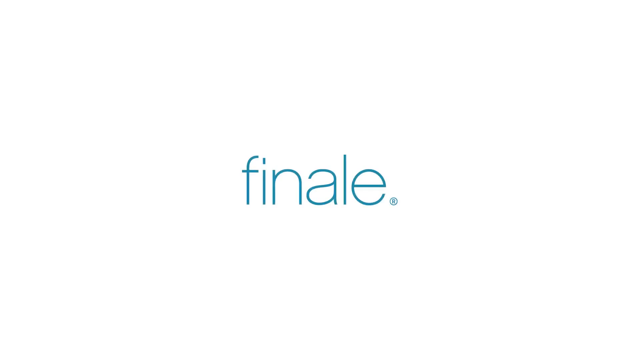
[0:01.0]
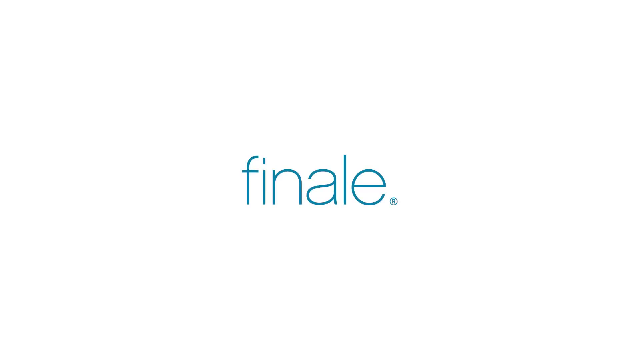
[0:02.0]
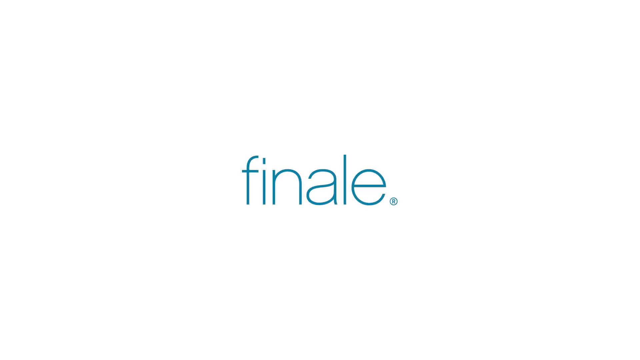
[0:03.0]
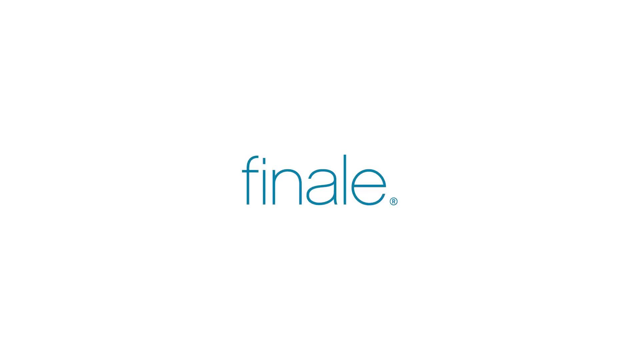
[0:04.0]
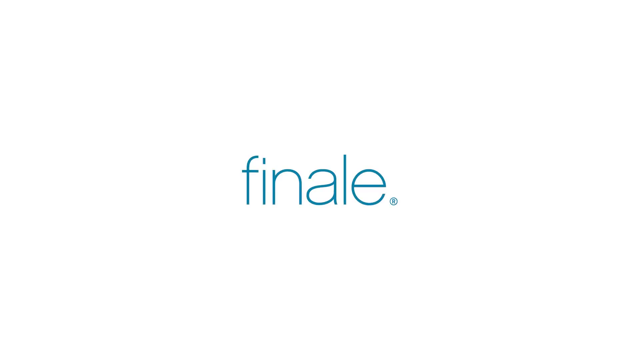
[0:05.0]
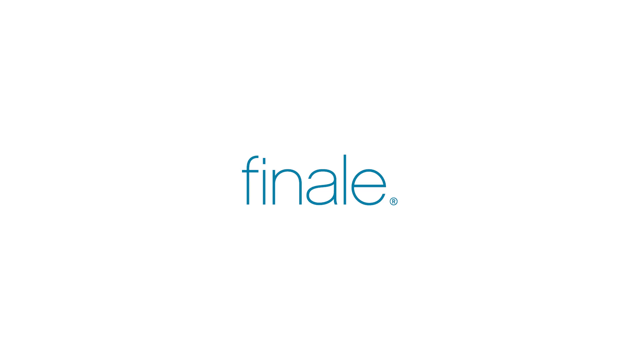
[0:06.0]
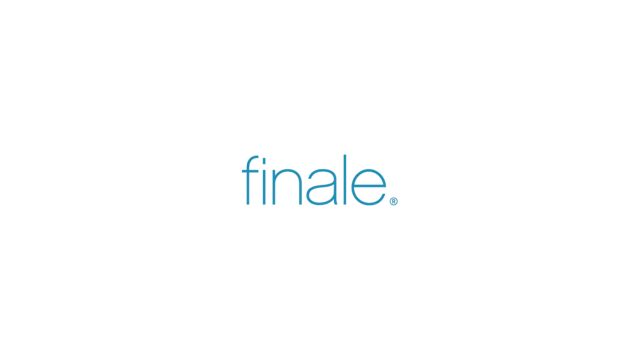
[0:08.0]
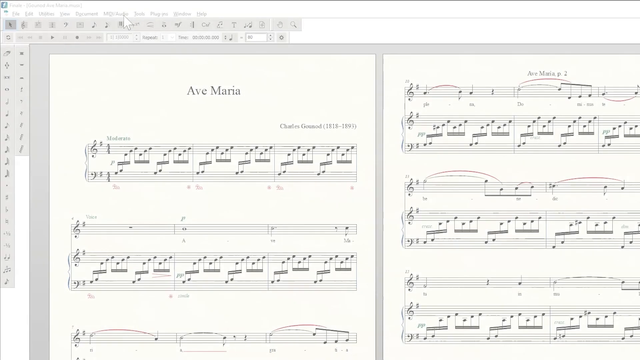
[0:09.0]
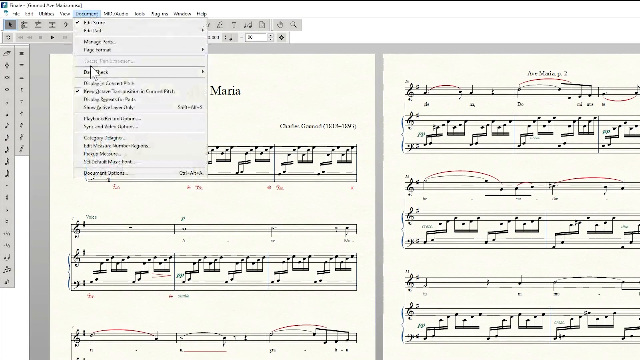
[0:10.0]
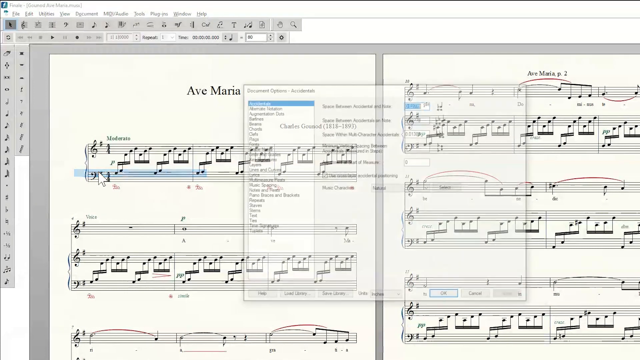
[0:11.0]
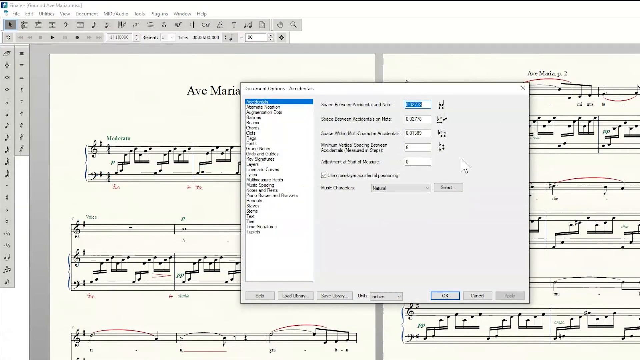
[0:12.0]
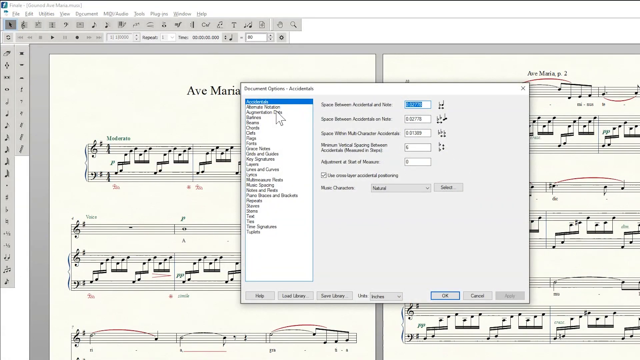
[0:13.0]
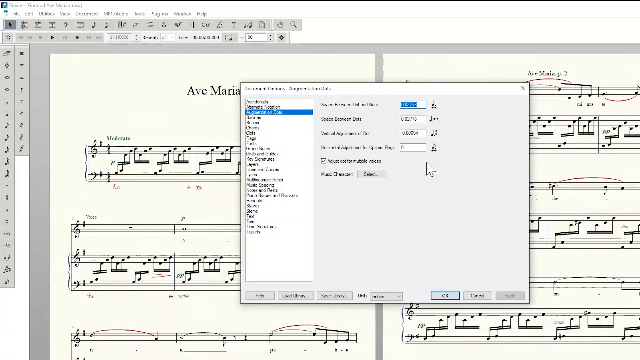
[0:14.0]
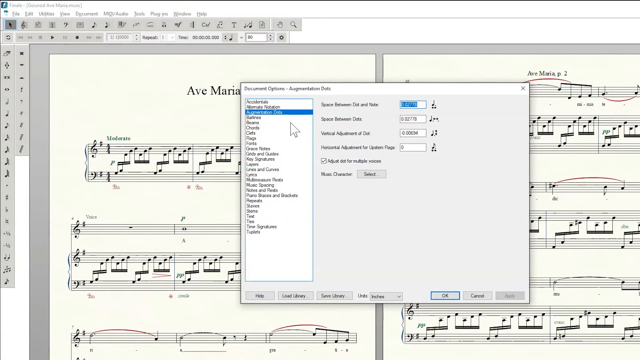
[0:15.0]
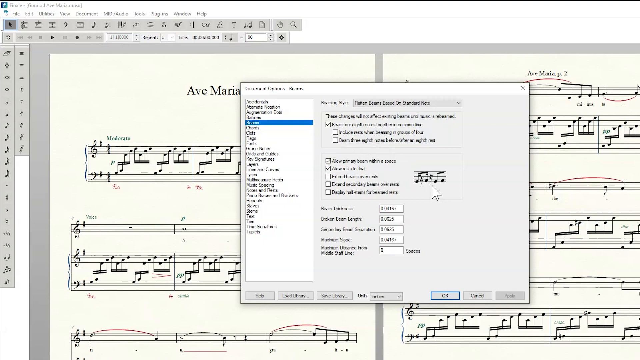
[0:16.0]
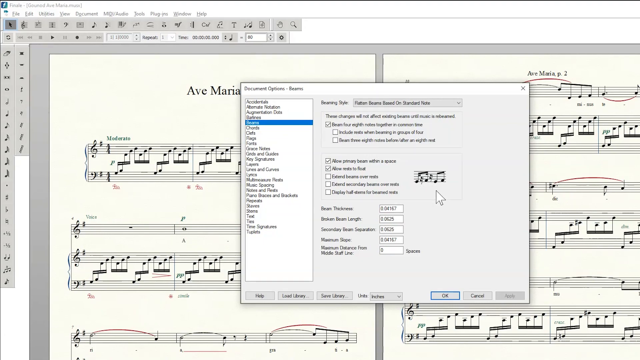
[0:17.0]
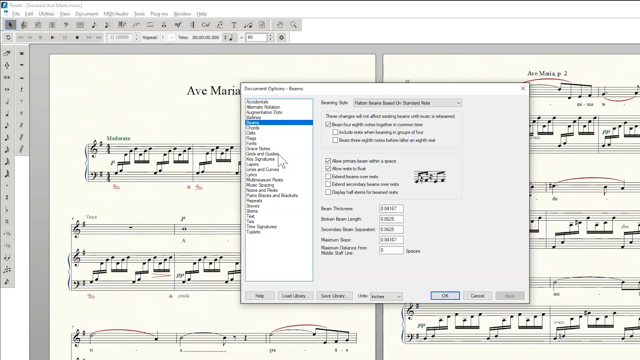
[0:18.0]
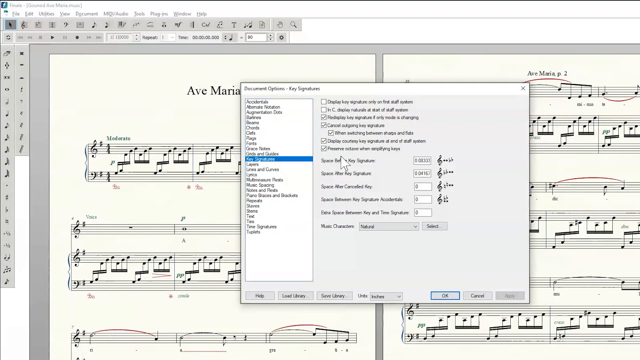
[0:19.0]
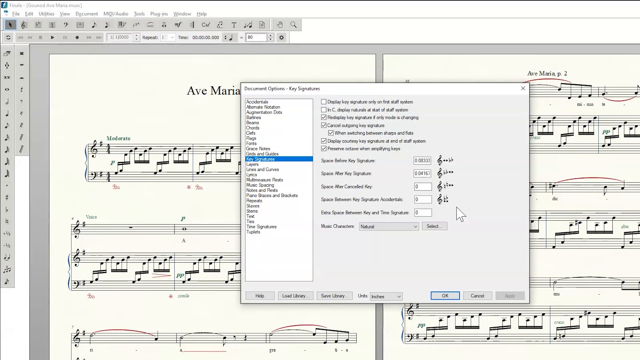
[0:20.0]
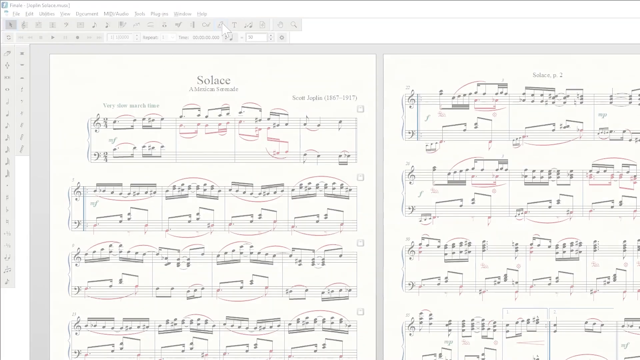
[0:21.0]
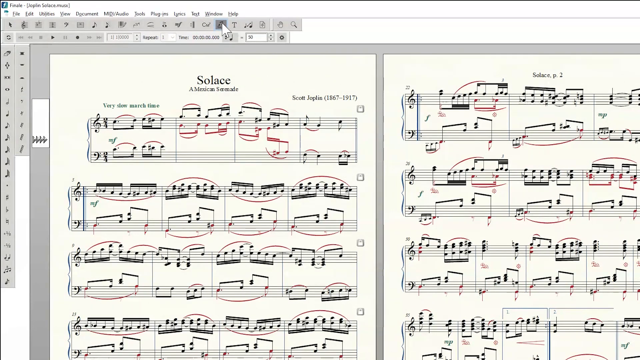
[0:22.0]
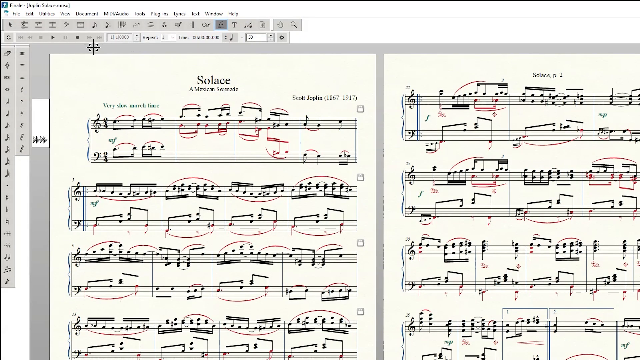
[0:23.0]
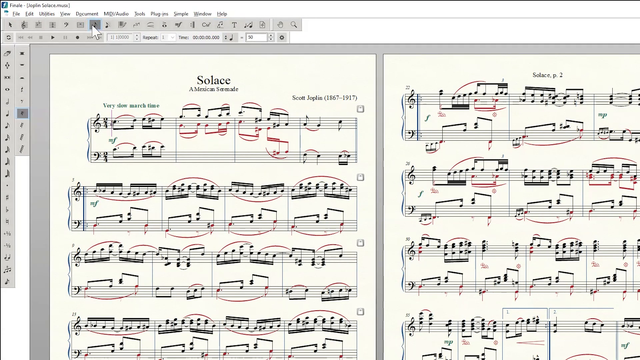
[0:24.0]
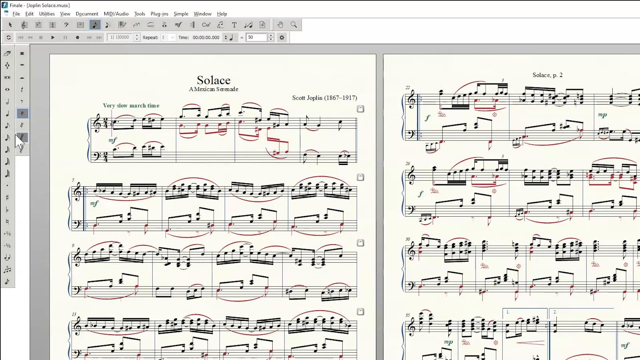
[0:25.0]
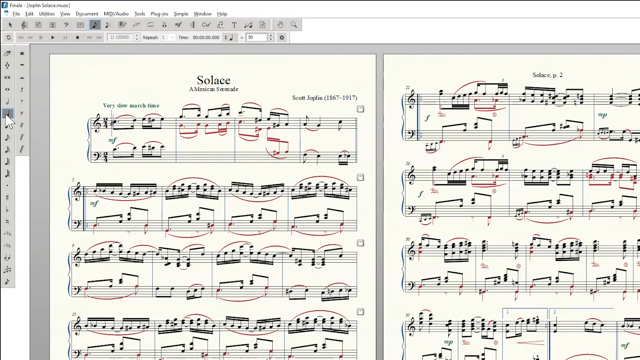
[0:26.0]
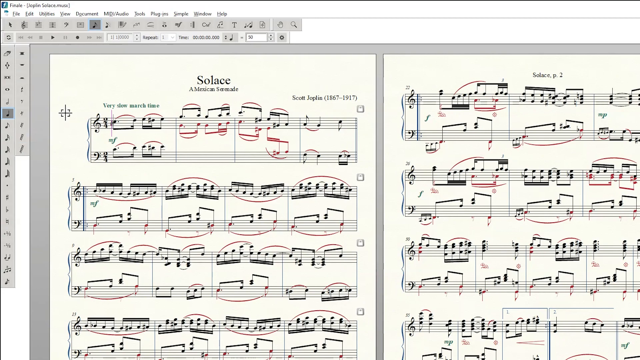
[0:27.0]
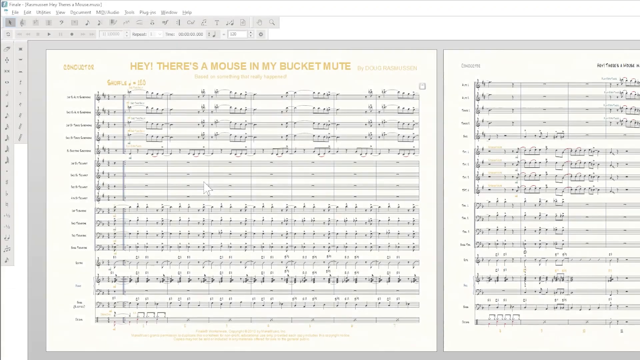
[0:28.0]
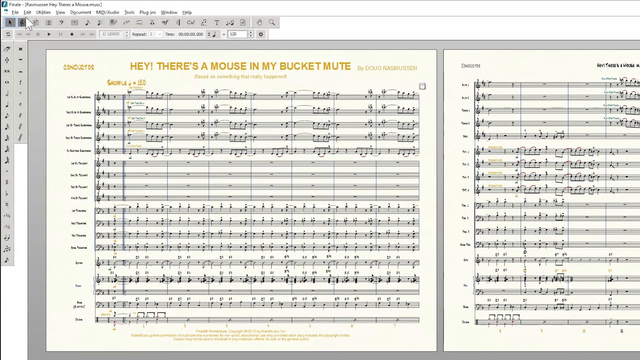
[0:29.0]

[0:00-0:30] The video opens with the text "finale" in the center, in lowercase letters in a blue font. Finale is shown to be music software for writing sheet music. A piece titled "Node Ave Maria.musx" appears, and a screen capture shows someone making edits to this sheet music. The options under the Document tab are opened for accidentals, and the Accidentals option is selected in a pop-up window. The user clicks on augmentation dots, then on beams, then on key signatures. The video then fades to more tools being explored across the top menu and along the side menu, with different options to click for adding notes of different lengths. The segment ends on a different piece titled "Hey There's a Mouse in My Bucket Mute" by Doug Rasmussen.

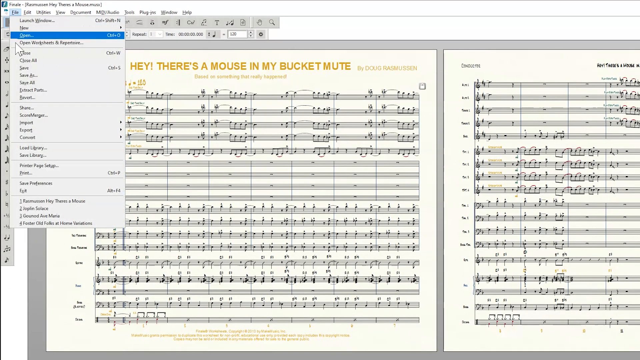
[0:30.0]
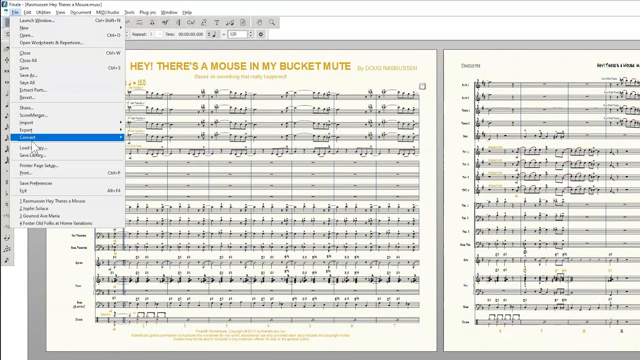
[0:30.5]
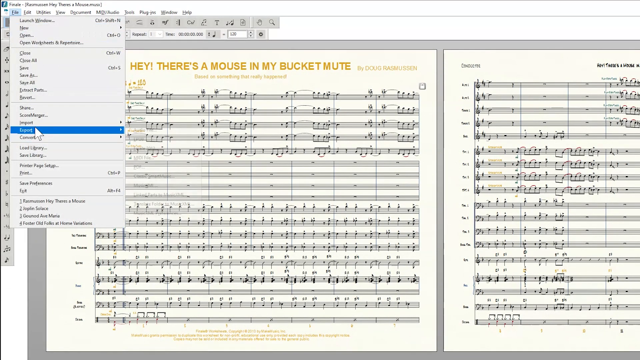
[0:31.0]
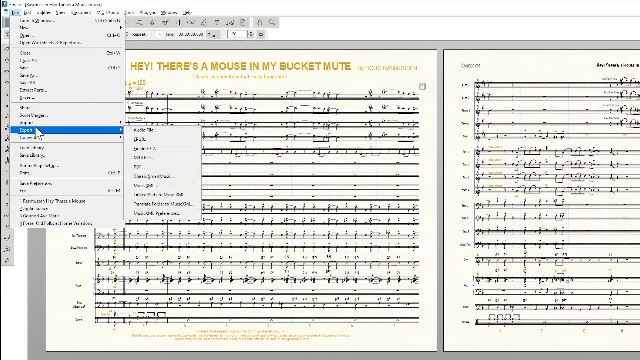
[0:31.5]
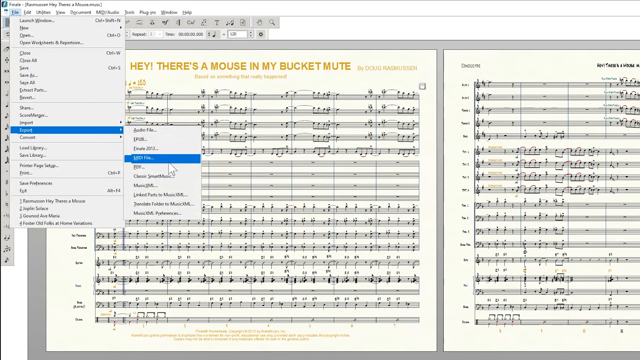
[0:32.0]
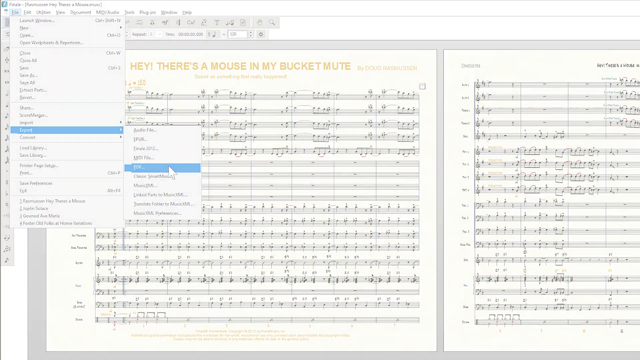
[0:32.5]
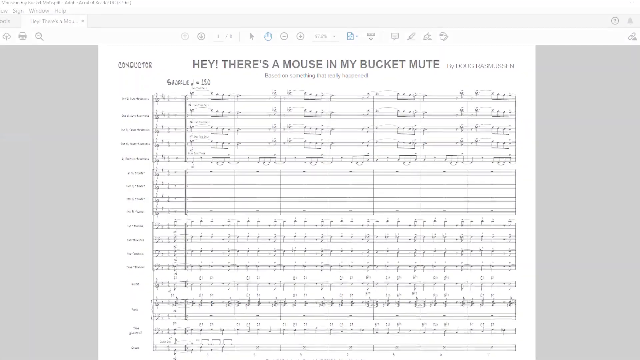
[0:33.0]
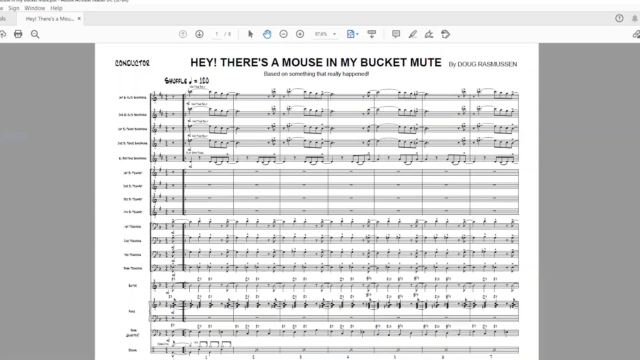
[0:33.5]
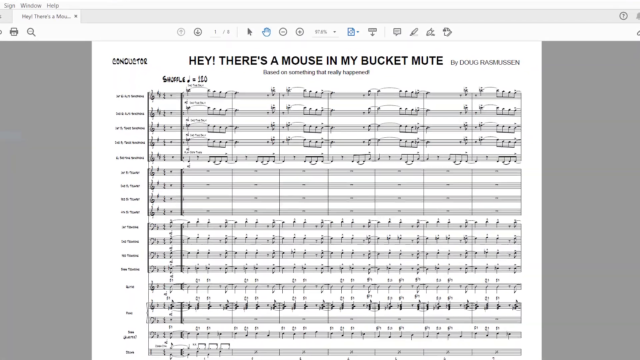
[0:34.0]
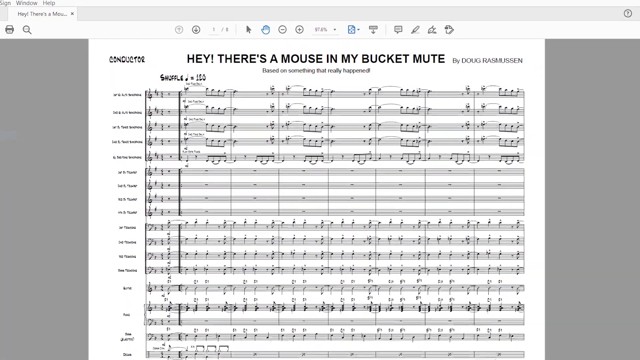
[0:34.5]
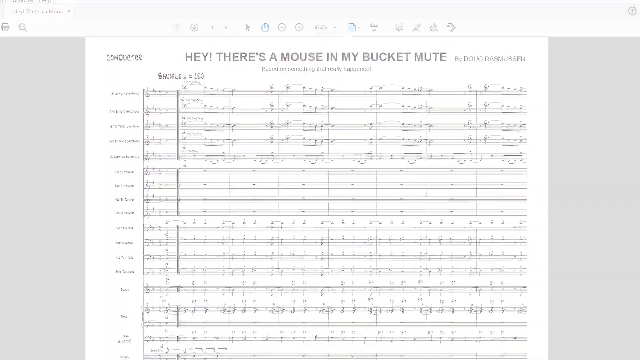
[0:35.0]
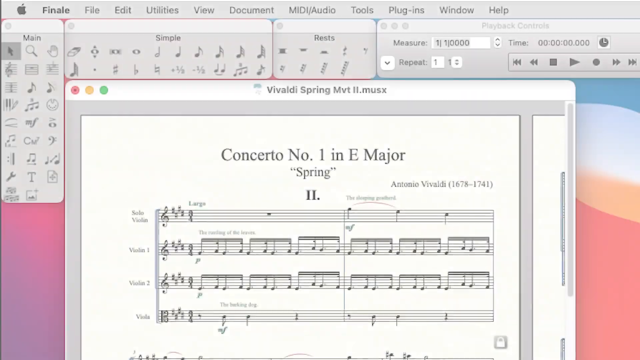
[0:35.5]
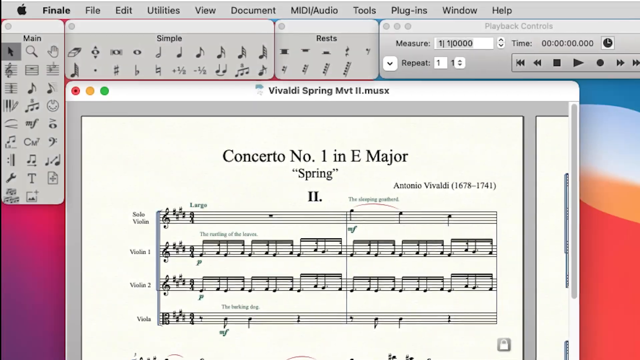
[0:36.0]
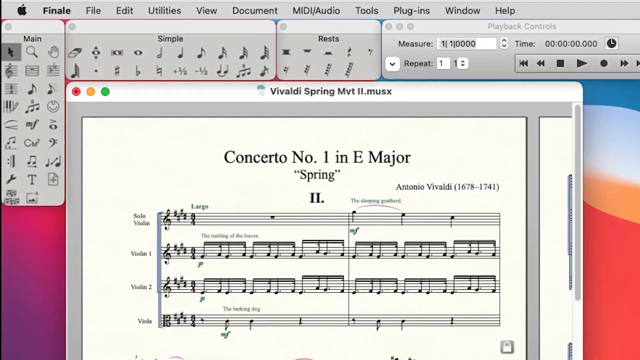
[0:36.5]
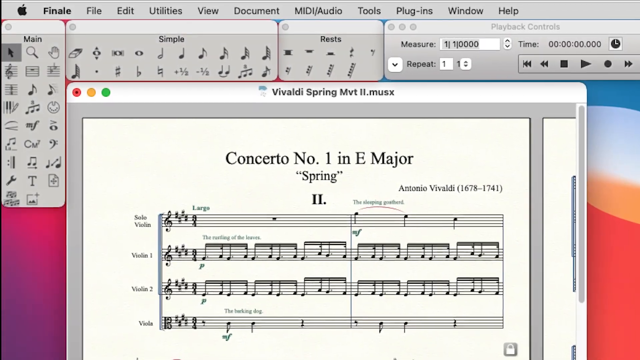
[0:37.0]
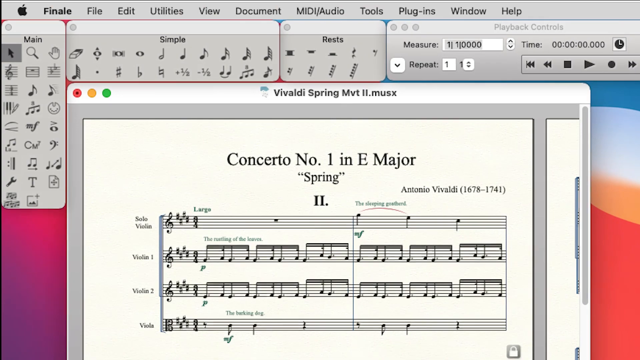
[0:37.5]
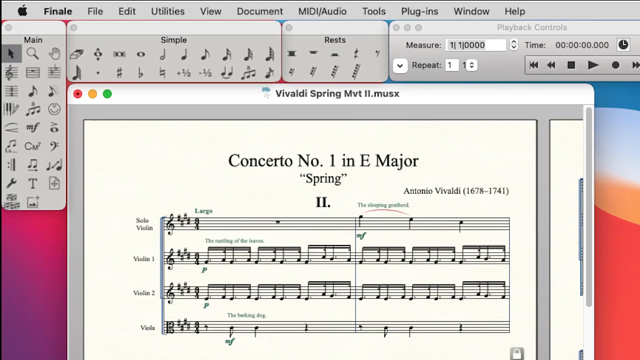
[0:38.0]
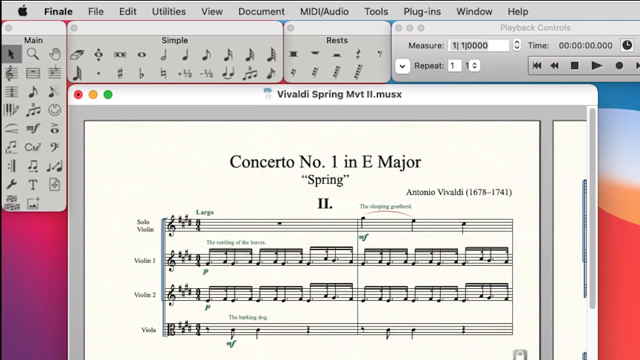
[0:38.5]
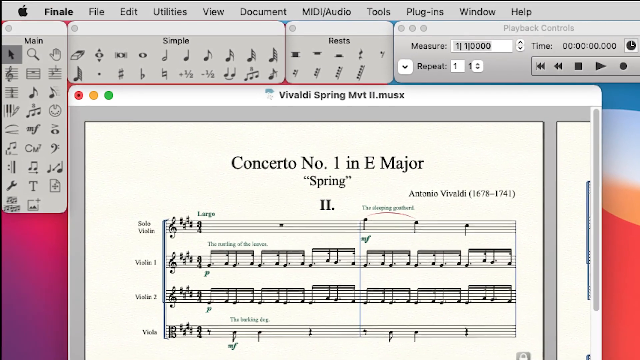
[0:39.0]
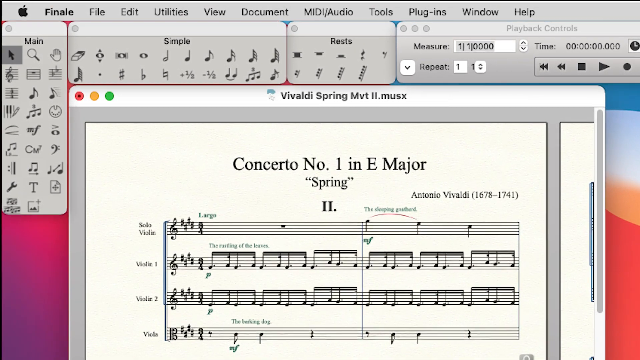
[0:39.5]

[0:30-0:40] The Finale interface continues to be shown. The piece "Hey, There's a Mouse in My Bucket Mute" by Doug Rasmussen appears with the File menu extended, showing its options. The view fades into another view of the same piece, then fades into a different view of the program as it appears on an Apple device, indicated by the Apple logo in the upper left-hand corner. Different pop-up windows for the various menus appear, this one showing a different piece titled "Concerto No. 1 in E Major" by Antonio Vivaldi.